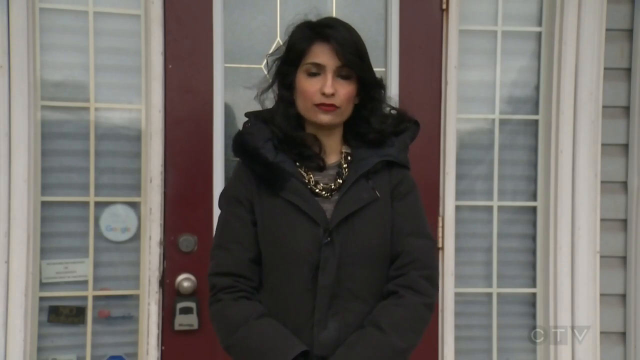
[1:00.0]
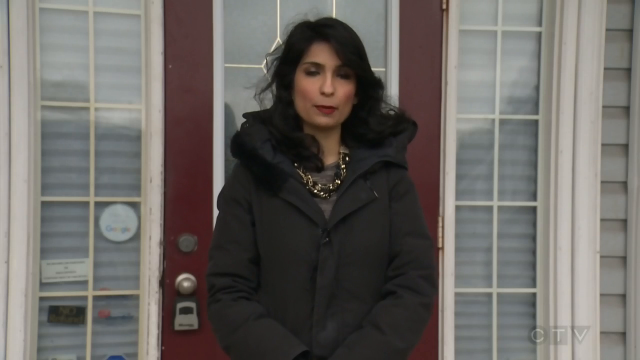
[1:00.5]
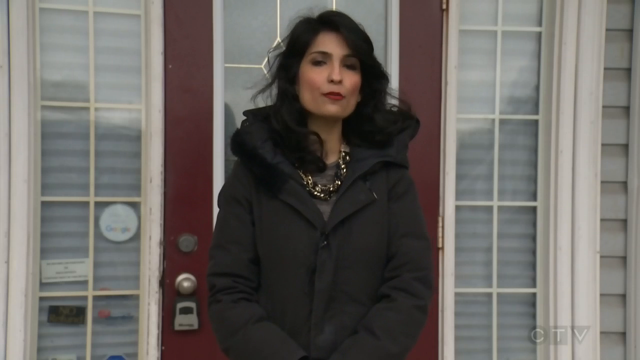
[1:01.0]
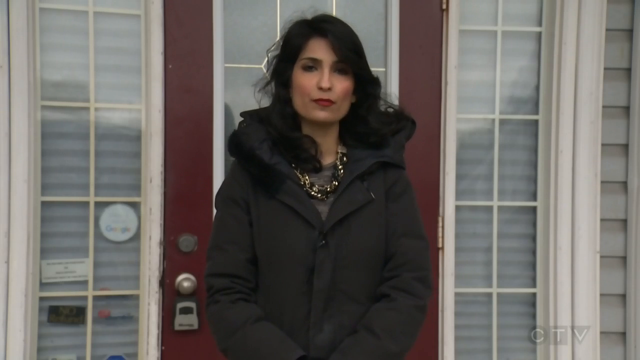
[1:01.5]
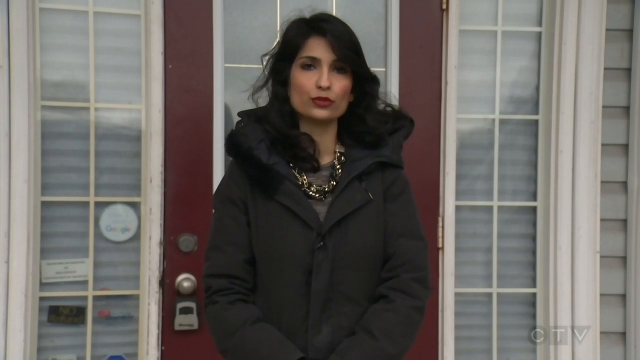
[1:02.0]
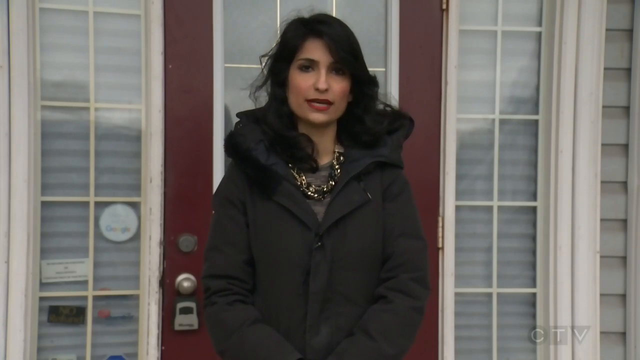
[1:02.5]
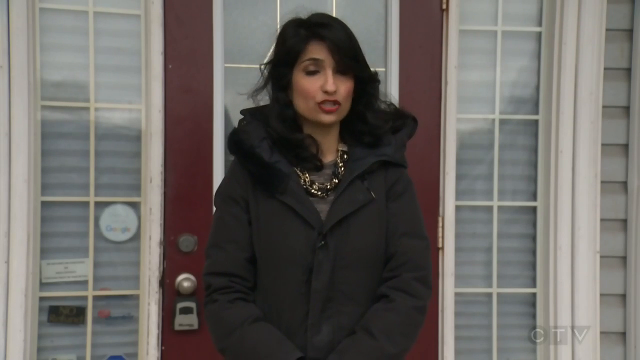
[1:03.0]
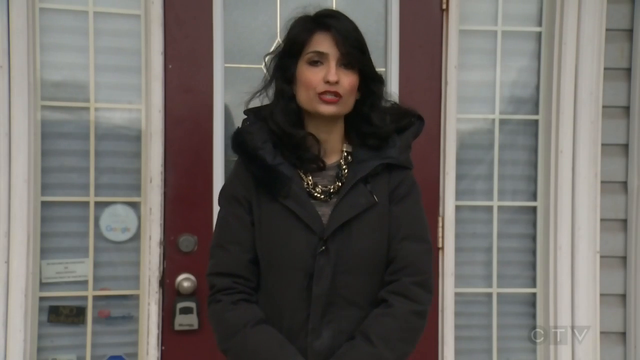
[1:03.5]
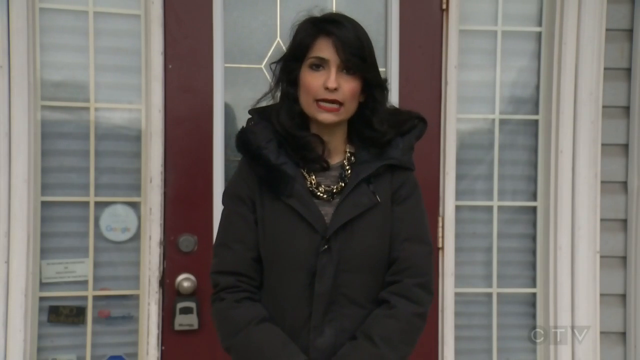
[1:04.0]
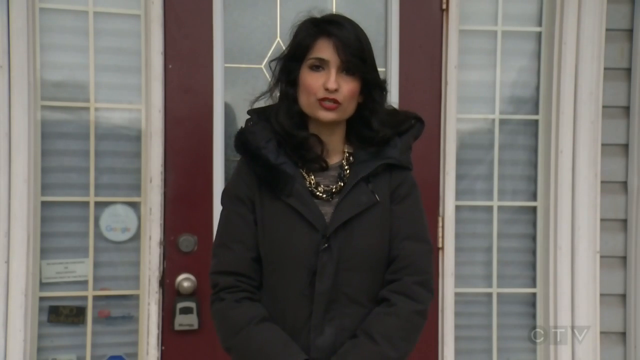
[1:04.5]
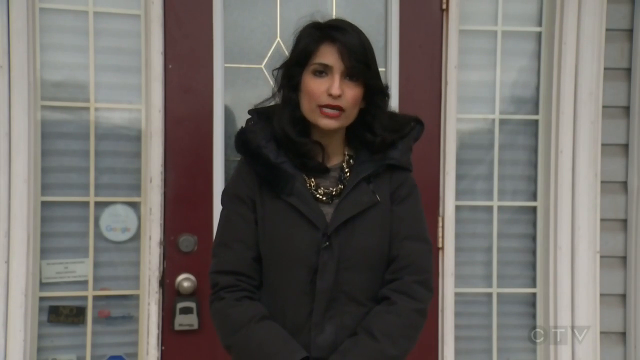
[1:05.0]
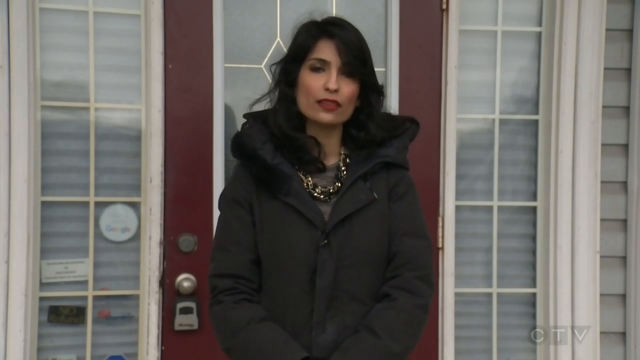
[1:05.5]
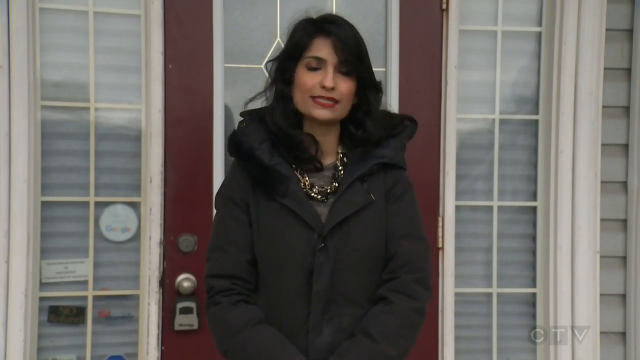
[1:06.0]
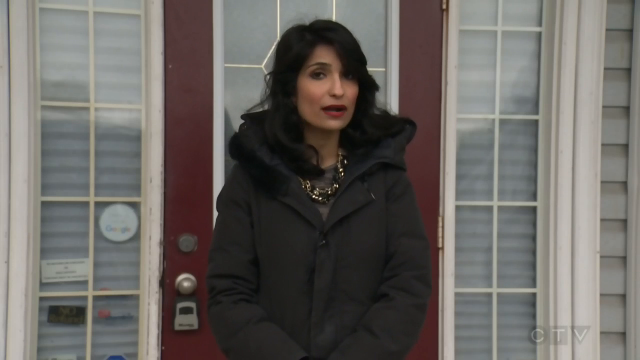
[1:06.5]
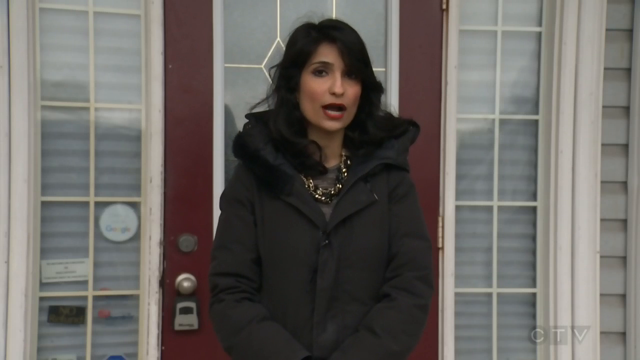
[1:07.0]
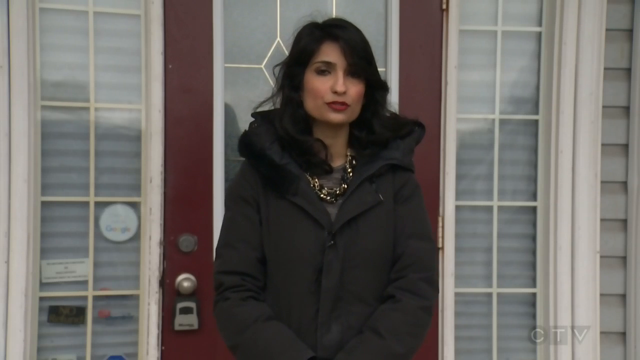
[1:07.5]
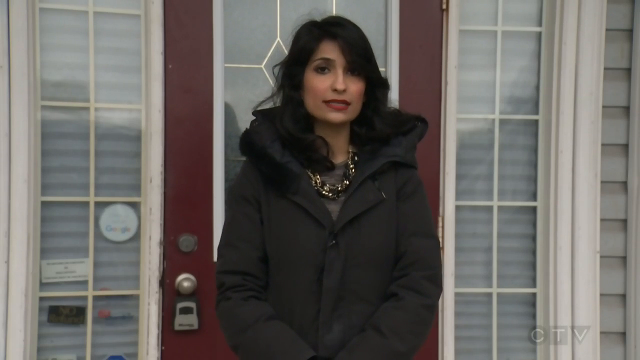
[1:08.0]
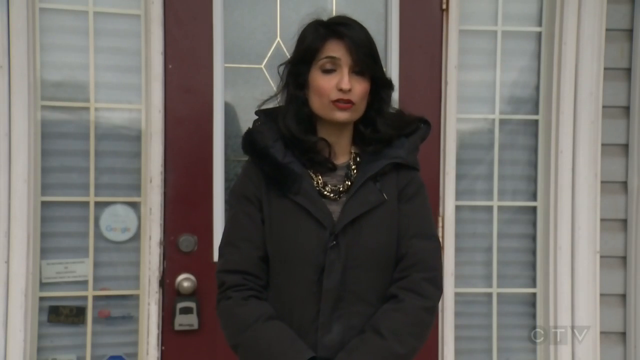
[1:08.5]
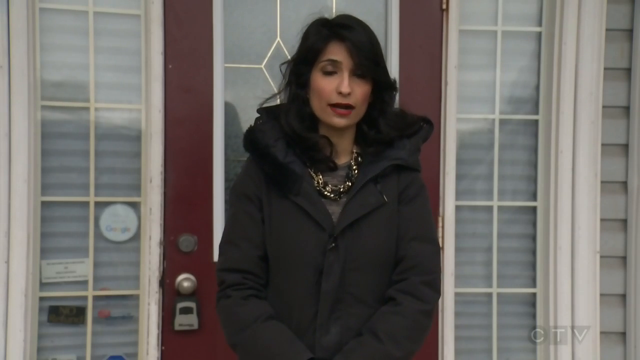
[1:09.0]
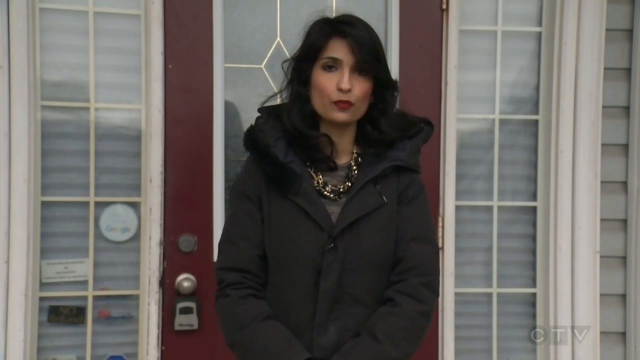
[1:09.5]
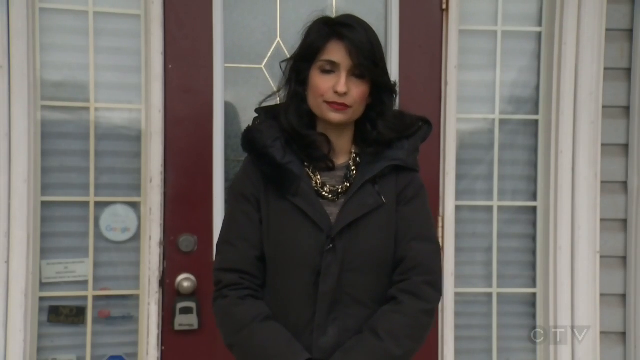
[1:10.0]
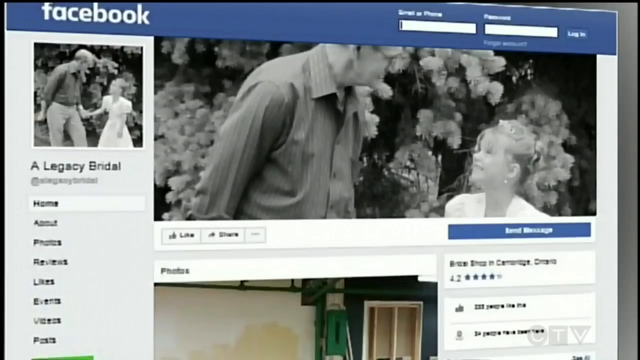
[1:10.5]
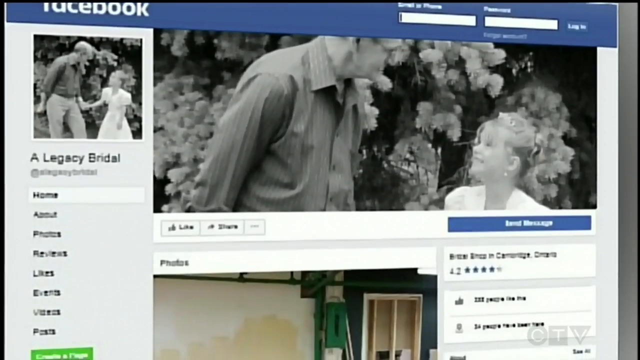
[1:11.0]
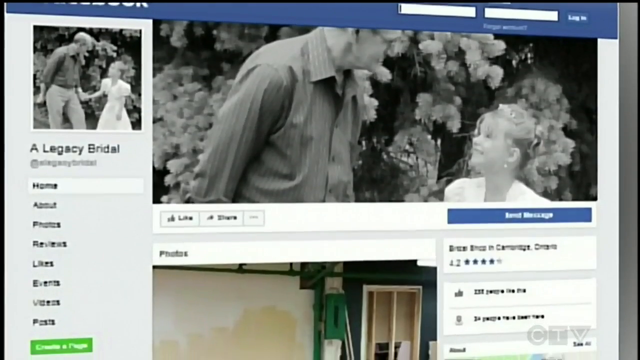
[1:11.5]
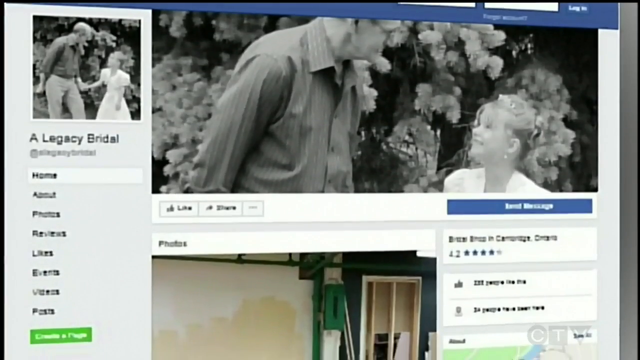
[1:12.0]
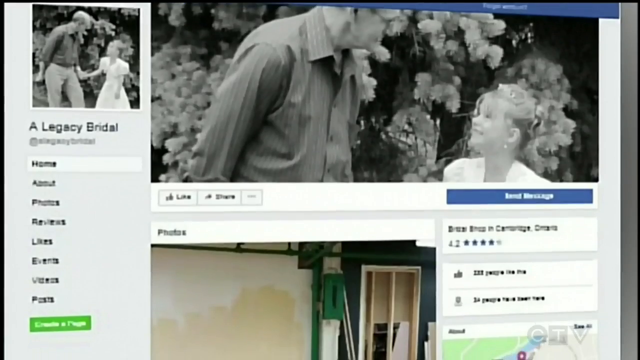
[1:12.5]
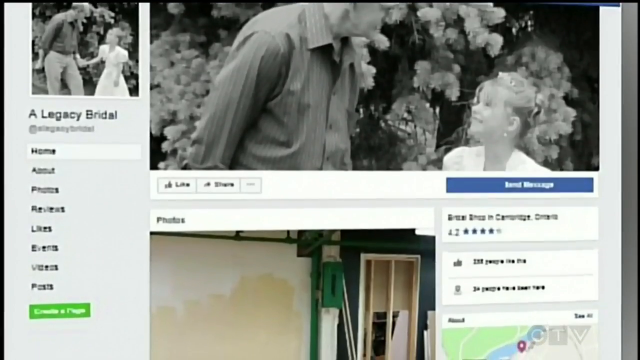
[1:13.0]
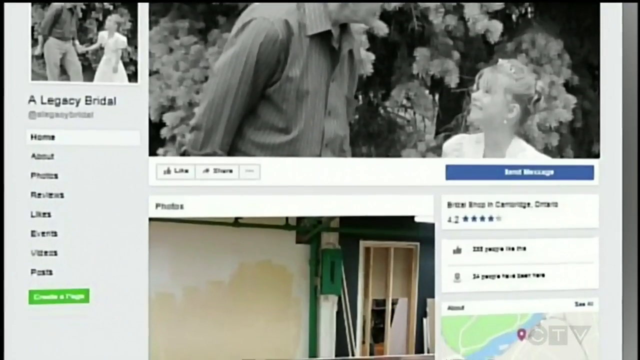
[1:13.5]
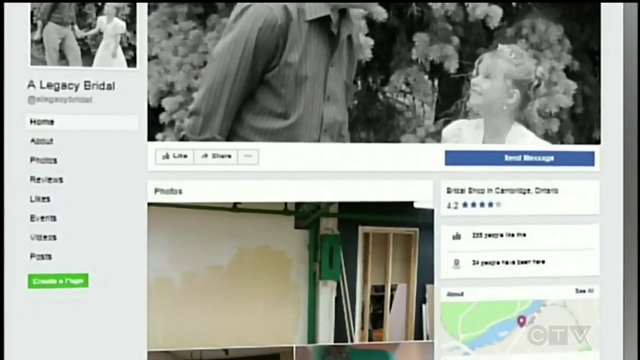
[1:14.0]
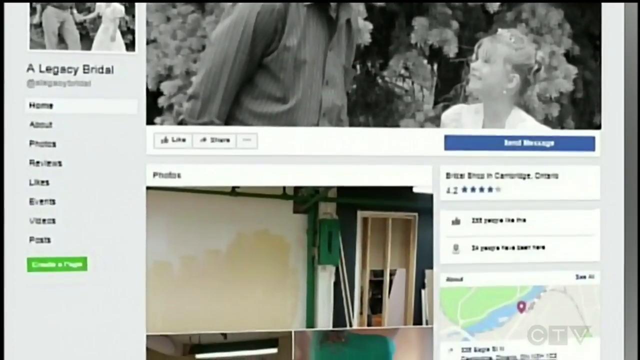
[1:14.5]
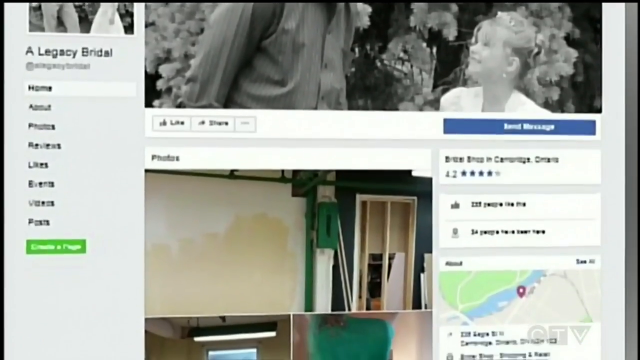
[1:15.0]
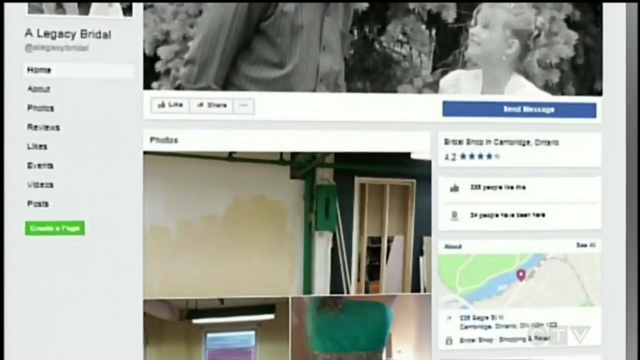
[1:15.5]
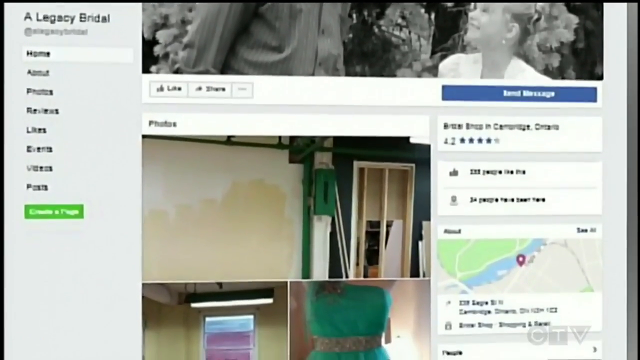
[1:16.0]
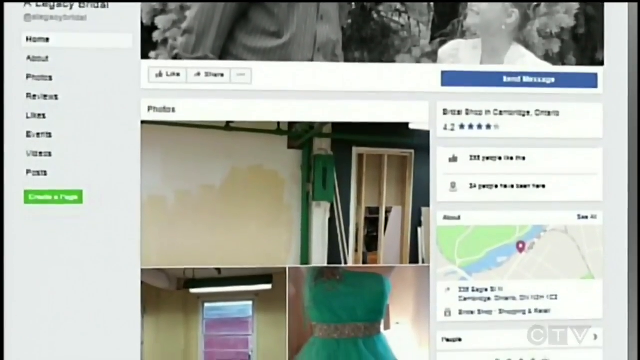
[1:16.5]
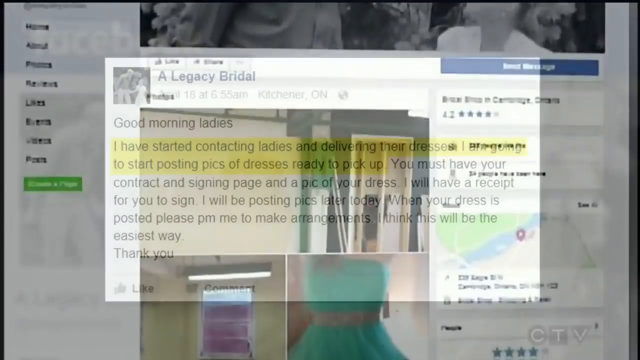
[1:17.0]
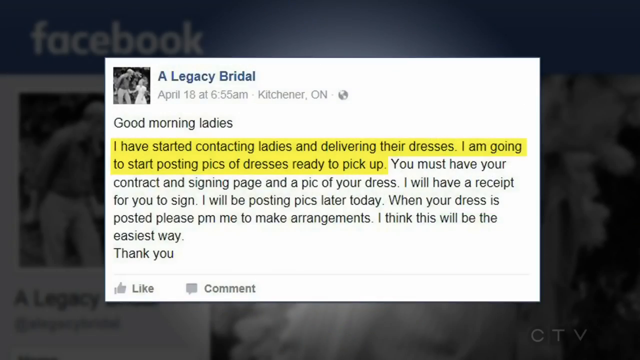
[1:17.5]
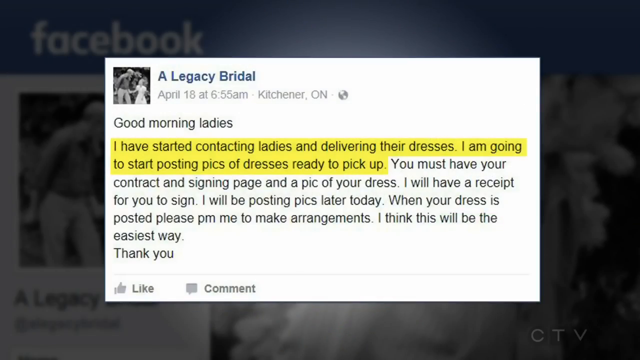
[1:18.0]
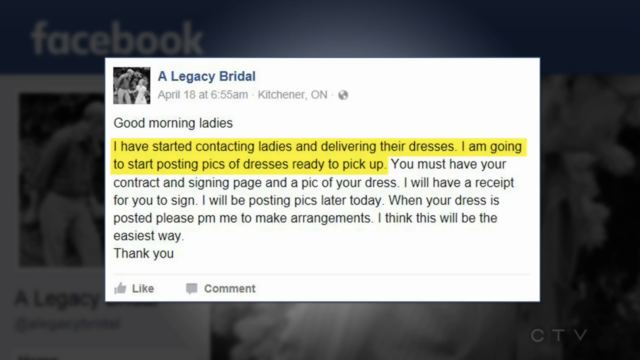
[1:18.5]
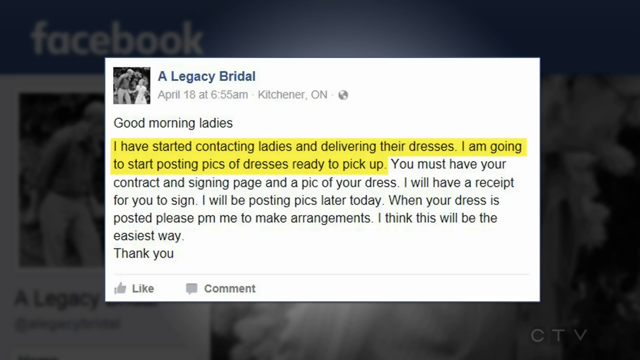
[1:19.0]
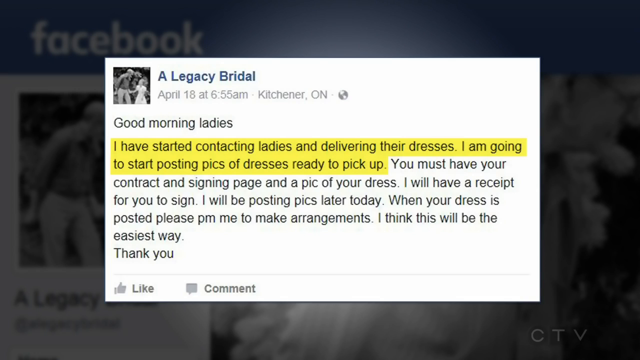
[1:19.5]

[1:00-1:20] A woman in a black winter coat with a sweater and a chunky necklace, with red lipstick and medium-length wavy black hair, stands in front of a building with a red door, talking to the camera. She appears to be a news representative. A Google logo is visible on the side. A Facebook page for legacy bridal, apparently the business just shown, appears, with black and white images of brides and other photos in the news feed. Scrolling down, there is some information about what appears to be an image of something under construction. A post from April 18th reads: "I will have a receipt for you to sign. I will be posting pics later today. When your dress is posted please PM me to make arrangements. I think this will be the easiest way. Thank you." The post has no likes or comments.